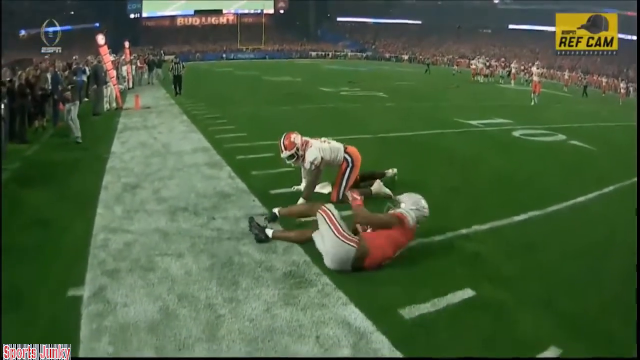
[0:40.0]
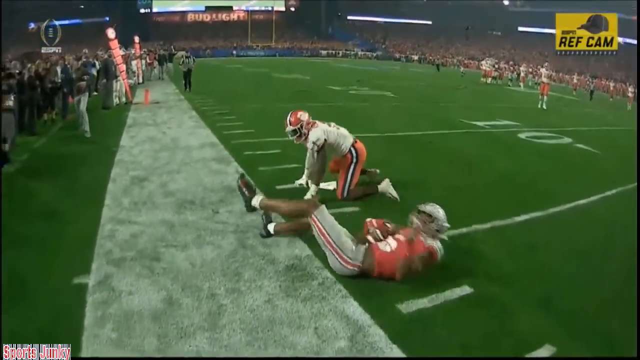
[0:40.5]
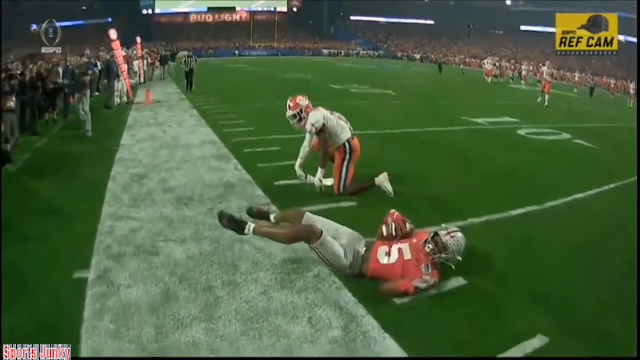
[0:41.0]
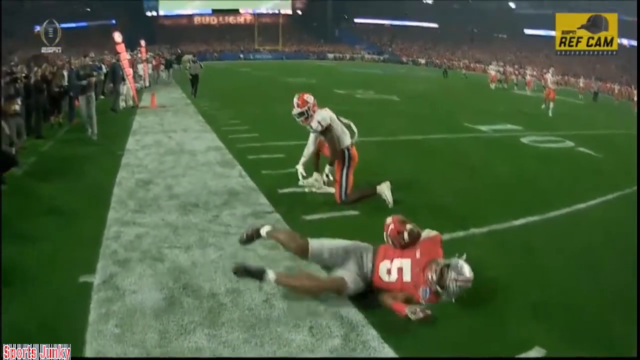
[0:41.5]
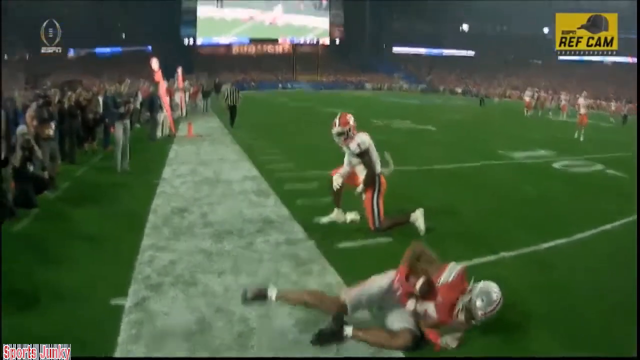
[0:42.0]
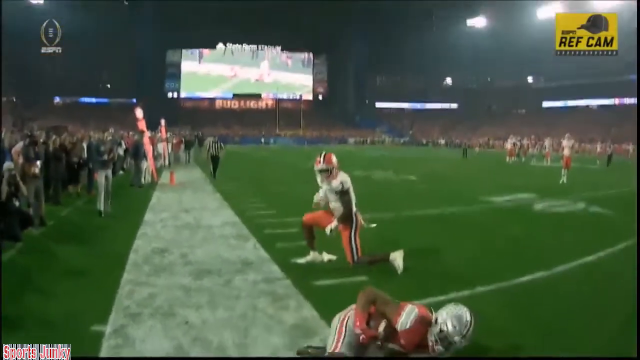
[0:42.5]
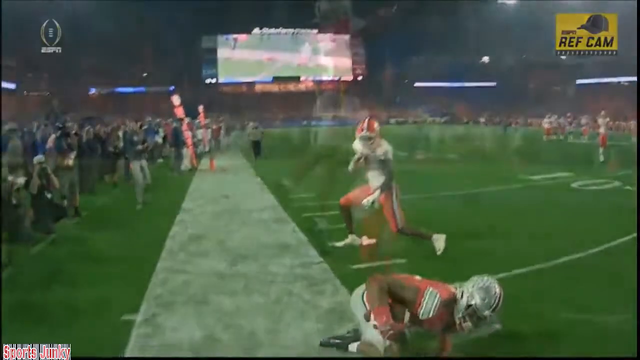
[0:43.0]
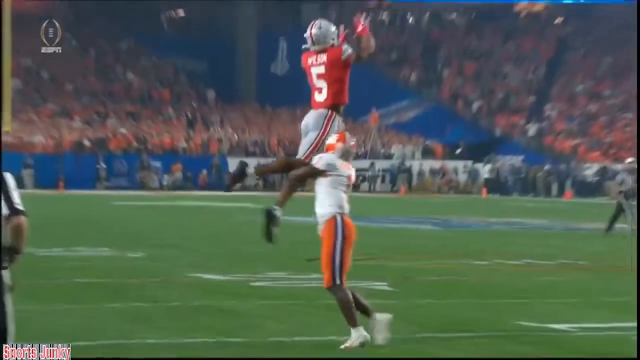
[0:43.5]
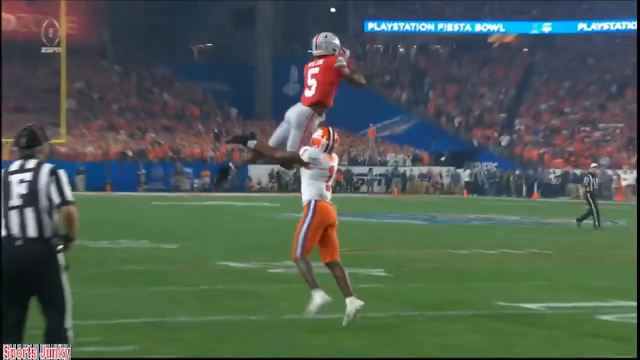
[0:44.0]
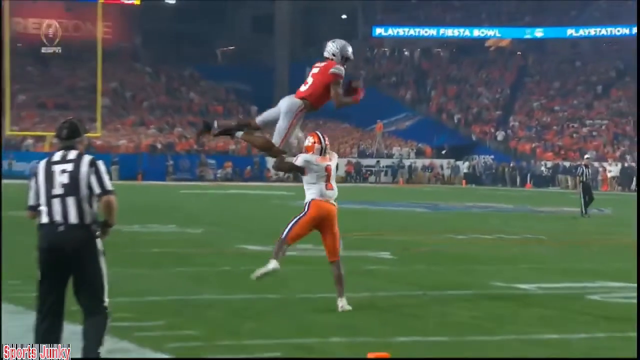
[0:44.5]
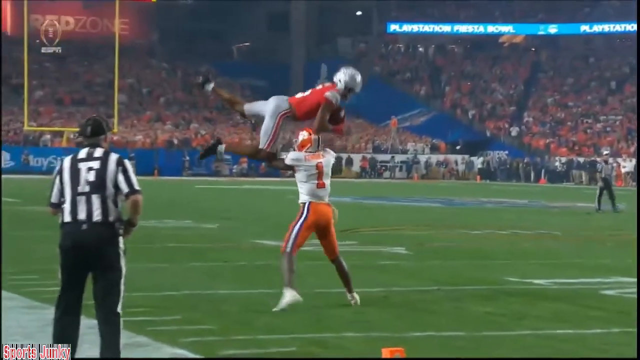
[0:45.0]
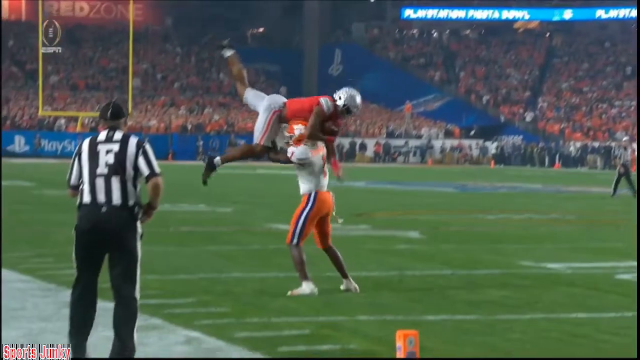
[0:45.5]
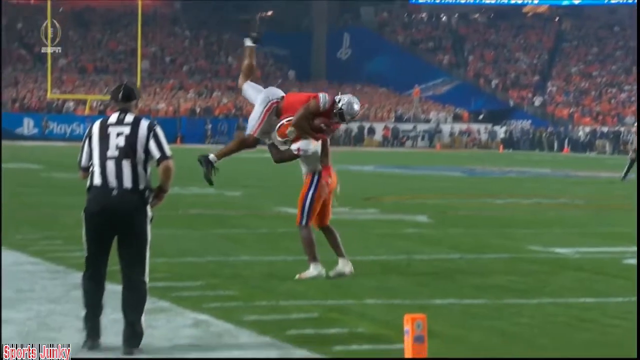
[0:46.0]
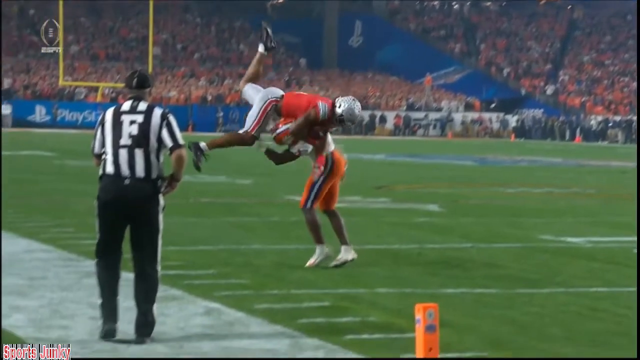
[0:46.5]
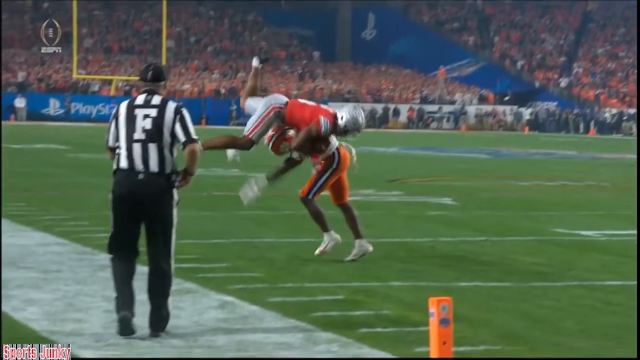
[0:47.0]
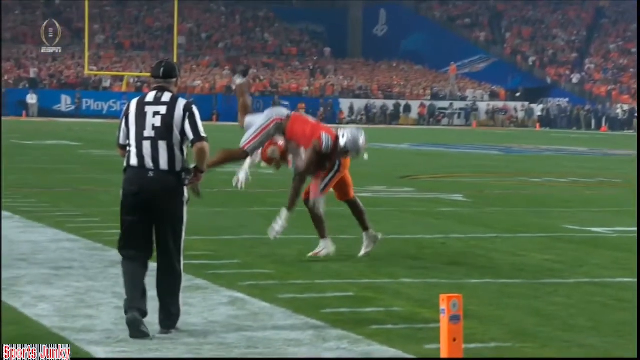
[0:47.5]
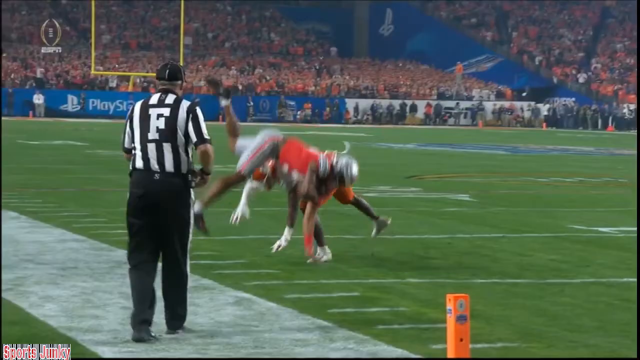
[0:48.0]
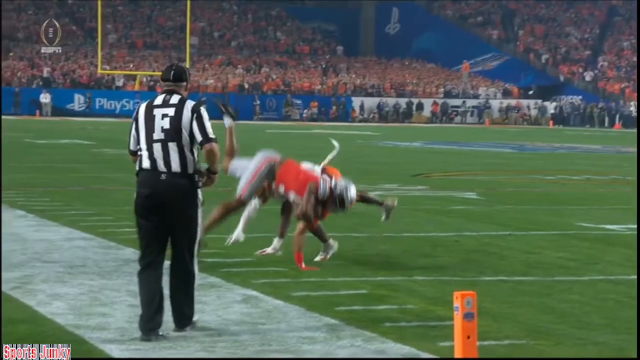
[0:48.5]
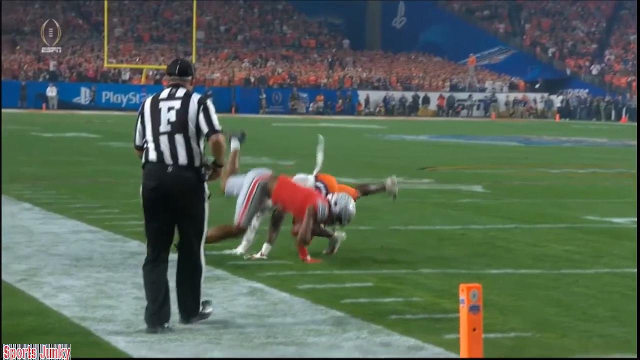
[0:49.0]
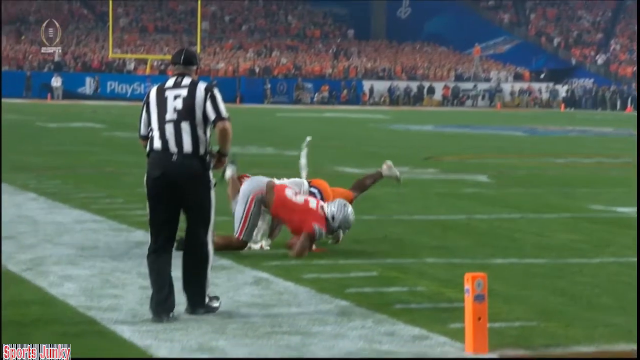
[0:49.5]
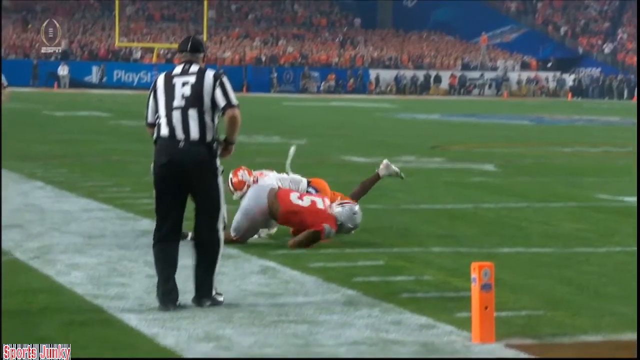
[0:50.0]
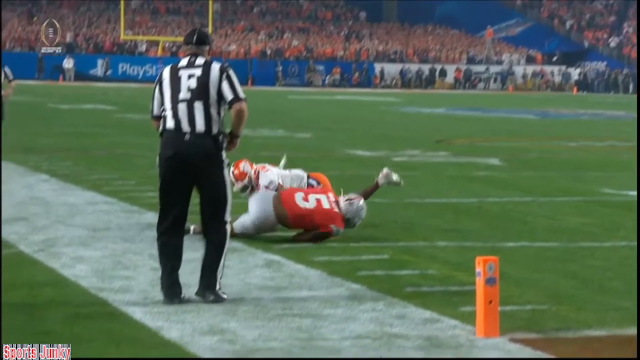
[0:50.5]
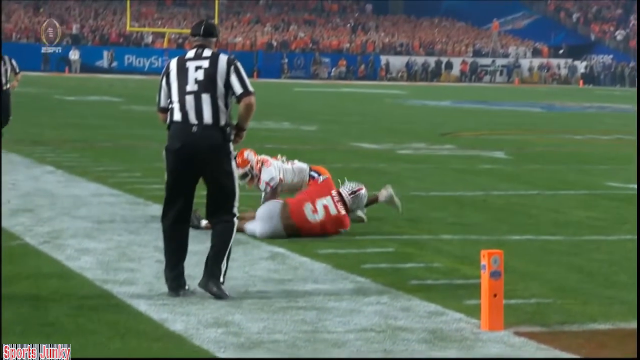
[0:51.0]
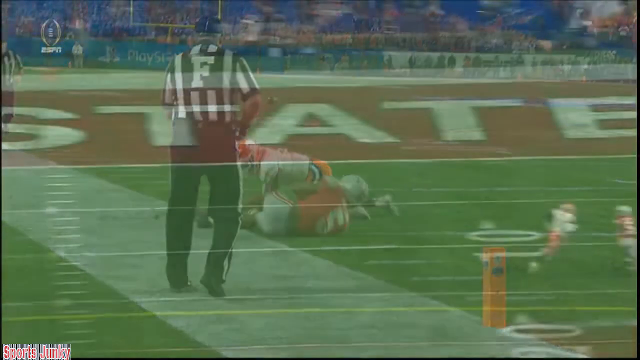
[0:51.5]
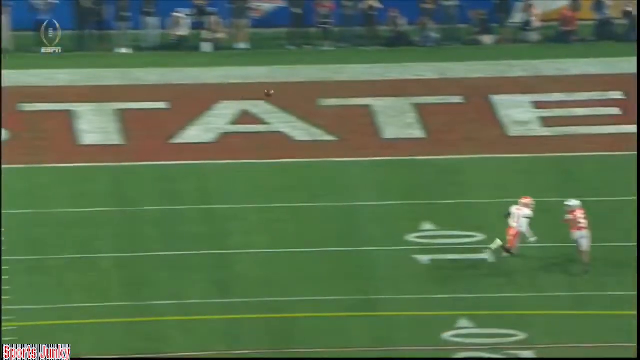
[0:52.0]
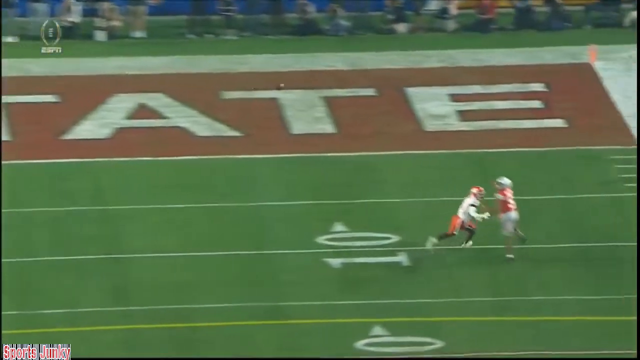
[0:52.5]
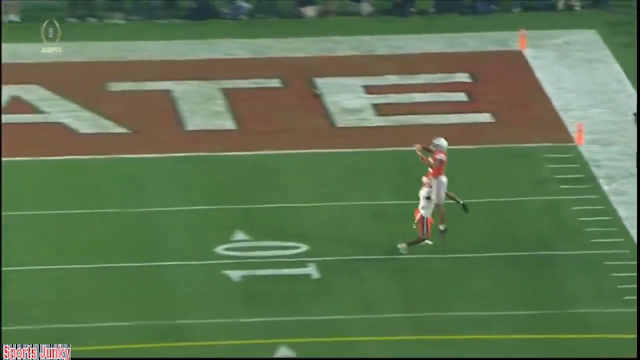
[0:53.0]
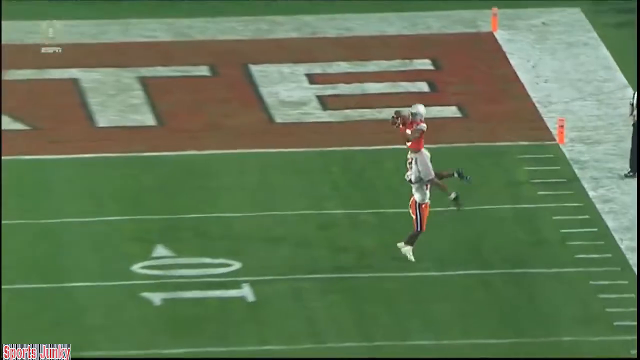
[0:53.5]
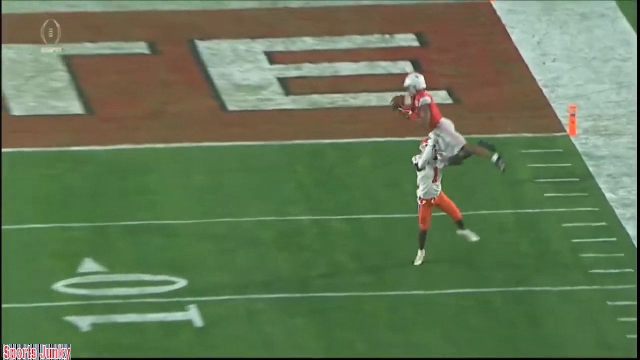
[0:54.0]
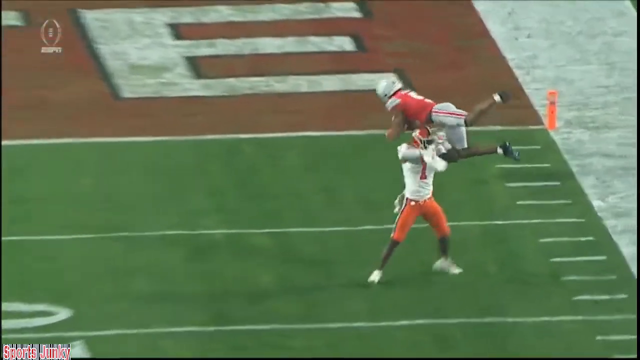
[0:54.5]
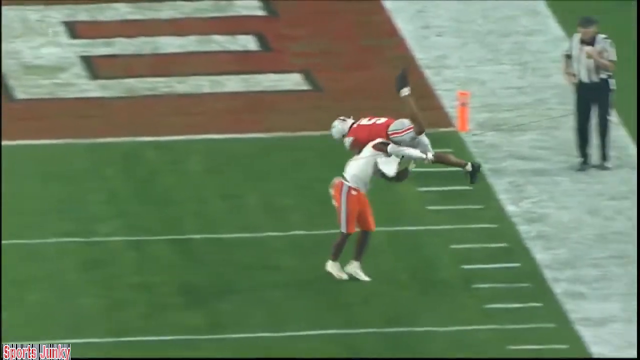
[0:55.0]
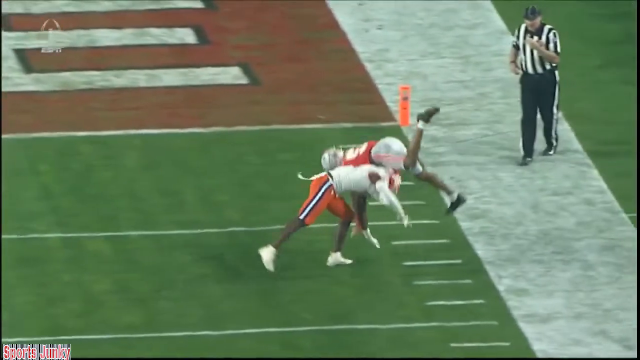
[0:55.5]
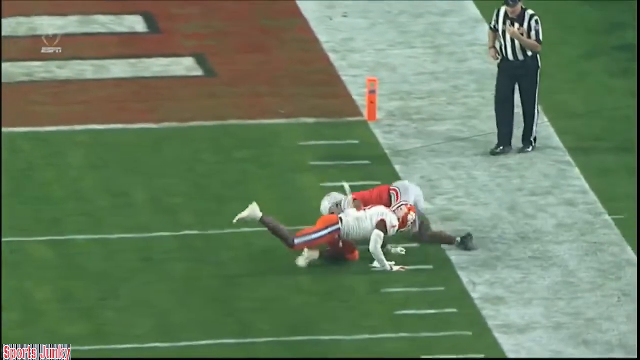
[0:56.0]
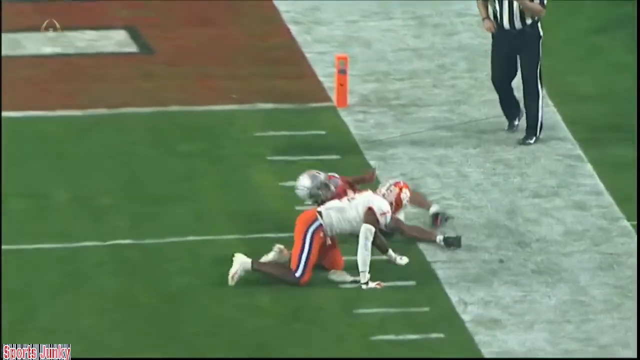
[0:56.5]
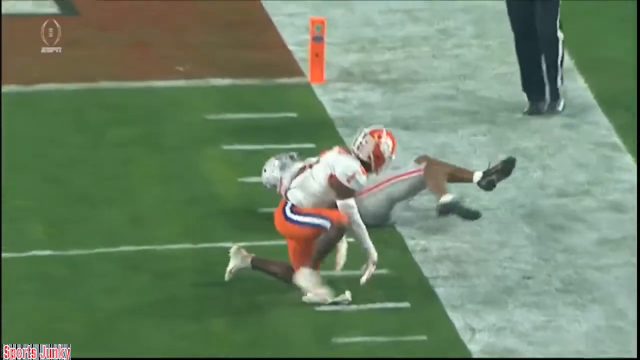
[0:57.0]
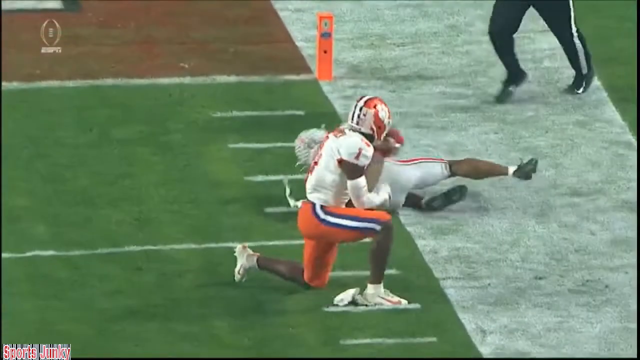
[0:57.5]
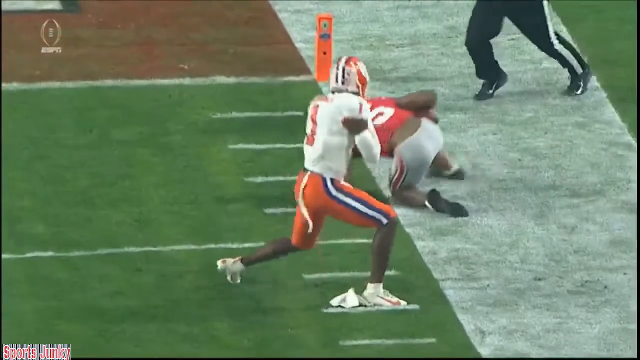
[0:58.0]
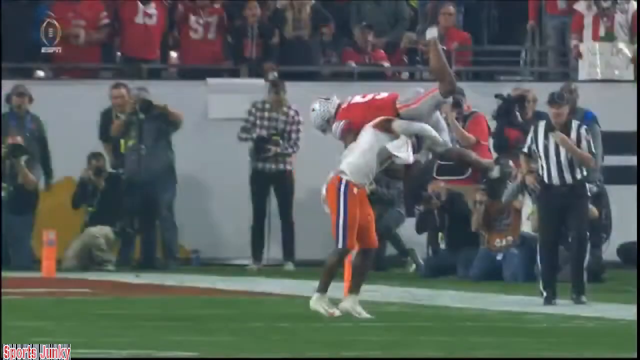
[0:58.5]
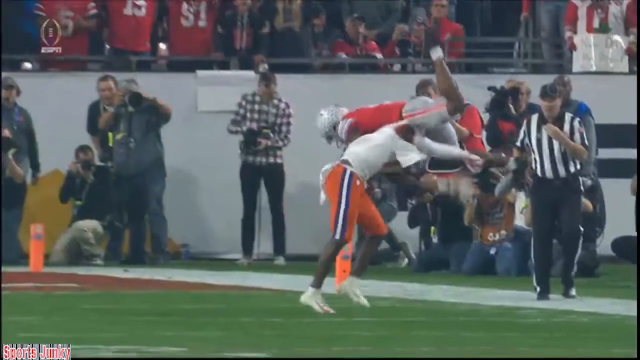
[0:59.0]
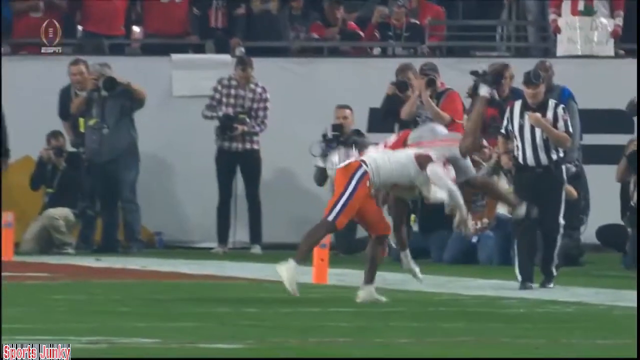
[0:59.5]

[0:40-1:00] In the PlayStation Fiesta Bowl on ESPN between the Clemson Tigers and the Ohio State Buckeyes, Clemson is on defense and Ohio State is on offense, deep in Clemson territory. A long pass has just been caught, and the question is whether number five, the Ohio State receiver, caught it in bounds. The view is from the ref cam, the referee's point of view, marked in the upper right by an emblem of a ref hat and the words "ref cam" in black on a yellow background. Number 5 goes way up in the air and comes down with the ball but is hit by the Clemson defender, and his right foot looks to be out of bounds.